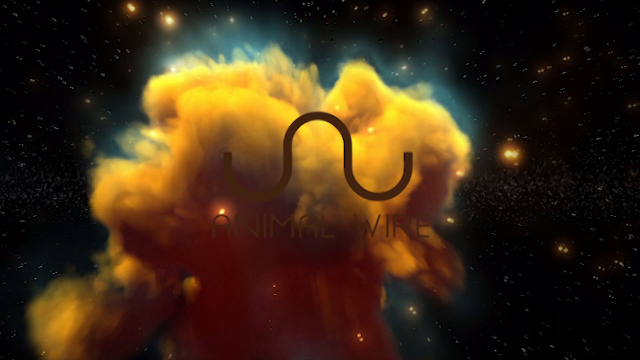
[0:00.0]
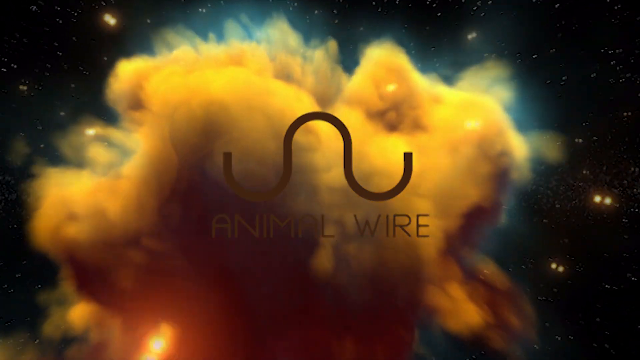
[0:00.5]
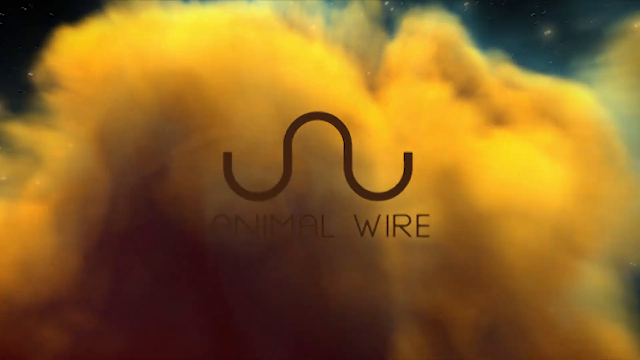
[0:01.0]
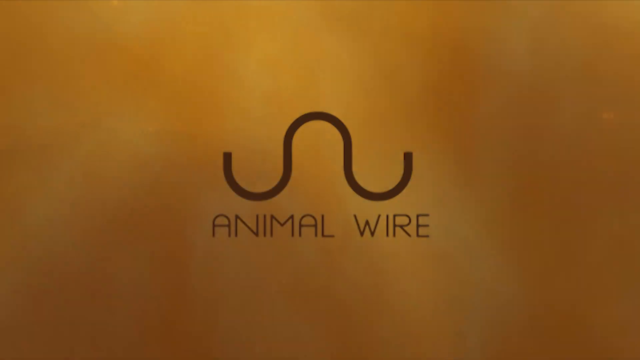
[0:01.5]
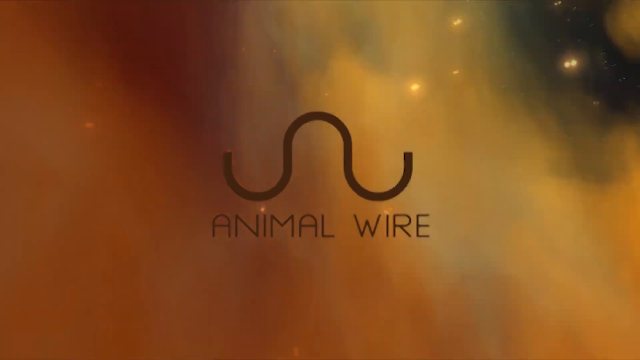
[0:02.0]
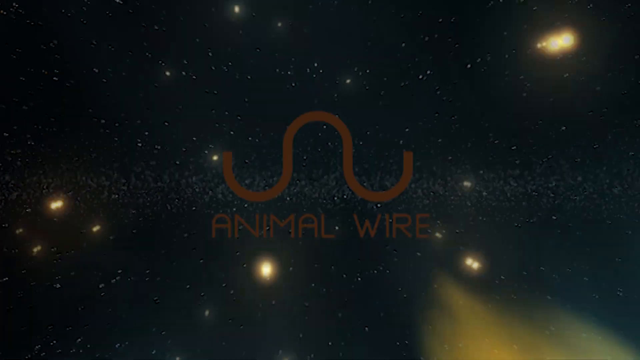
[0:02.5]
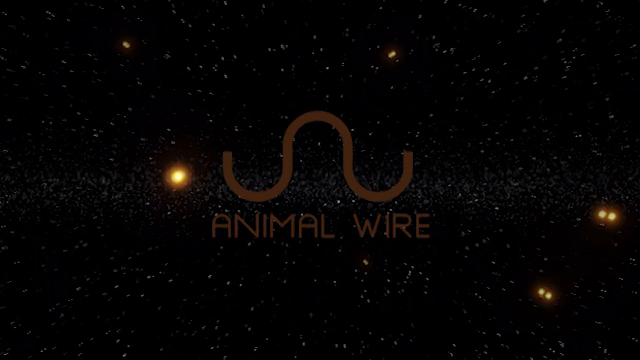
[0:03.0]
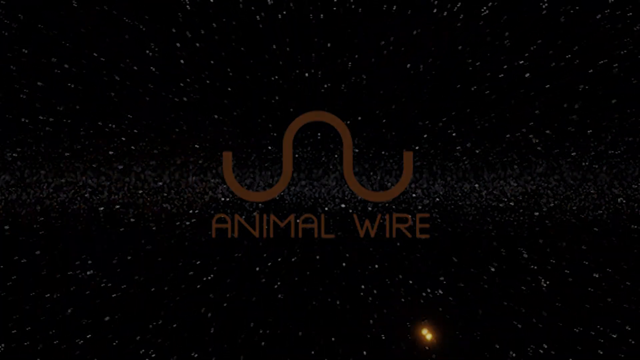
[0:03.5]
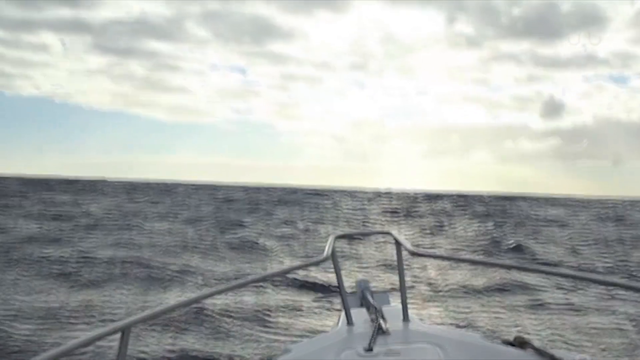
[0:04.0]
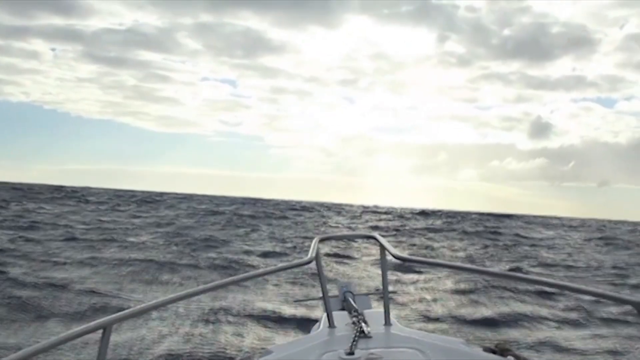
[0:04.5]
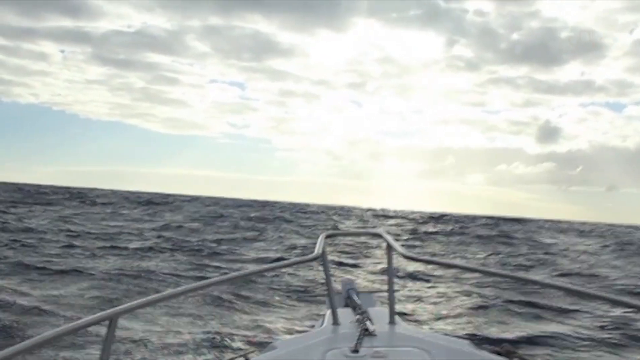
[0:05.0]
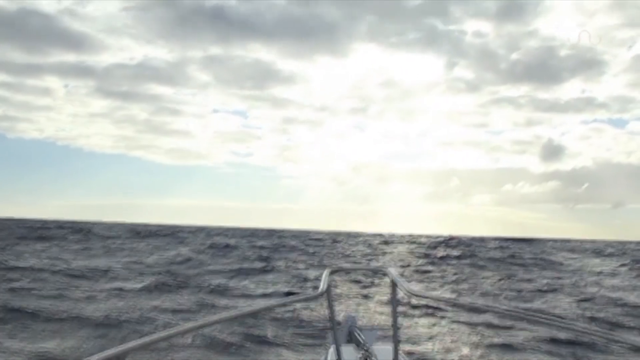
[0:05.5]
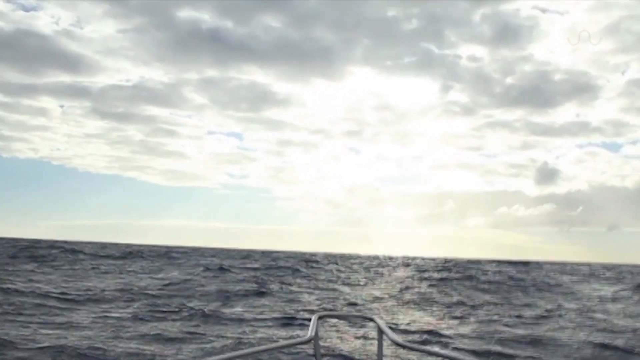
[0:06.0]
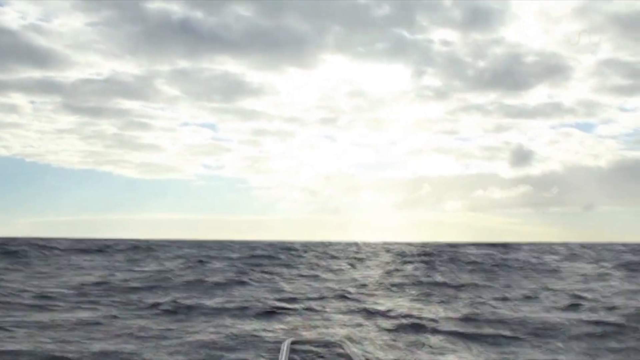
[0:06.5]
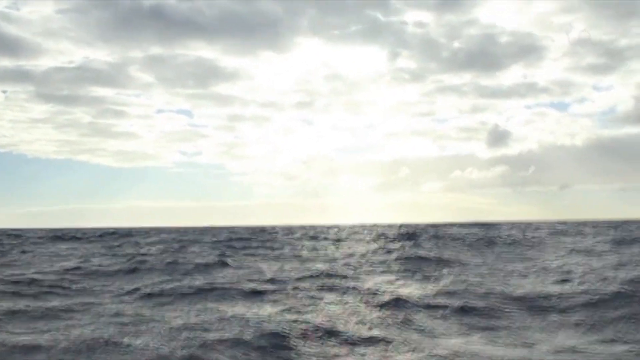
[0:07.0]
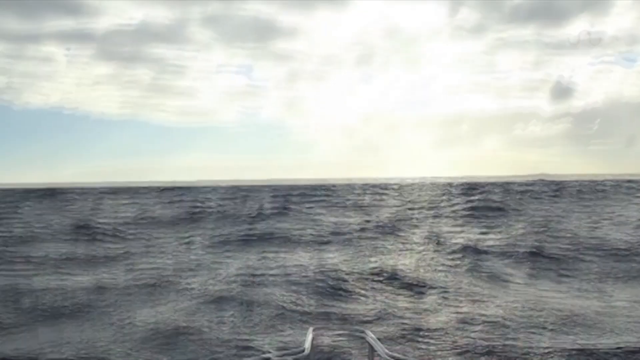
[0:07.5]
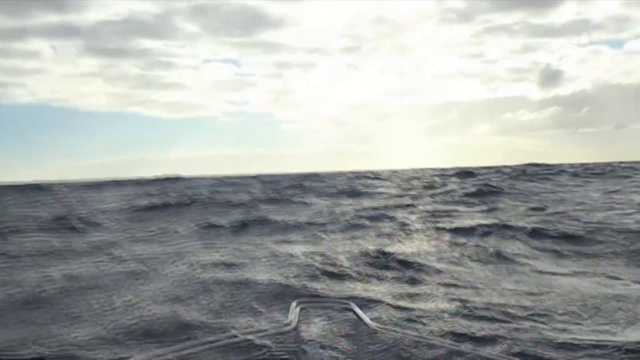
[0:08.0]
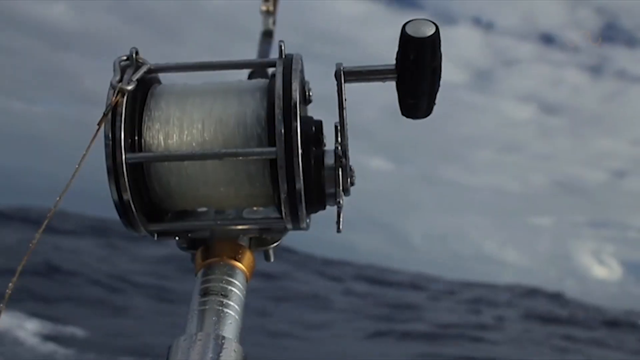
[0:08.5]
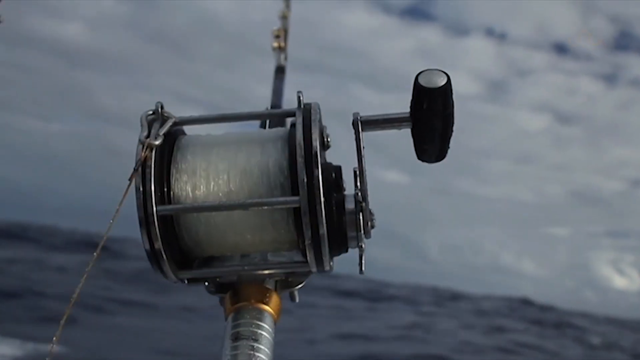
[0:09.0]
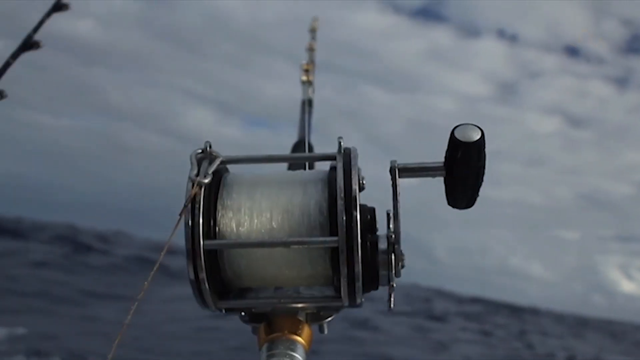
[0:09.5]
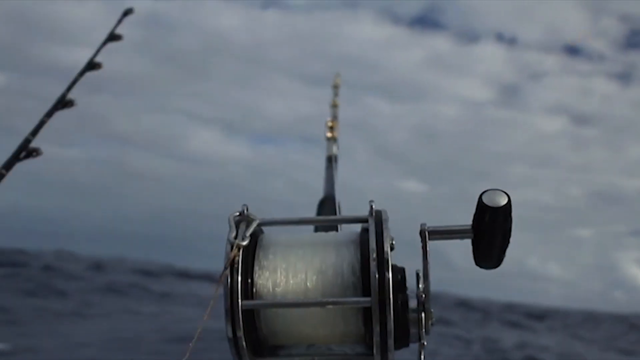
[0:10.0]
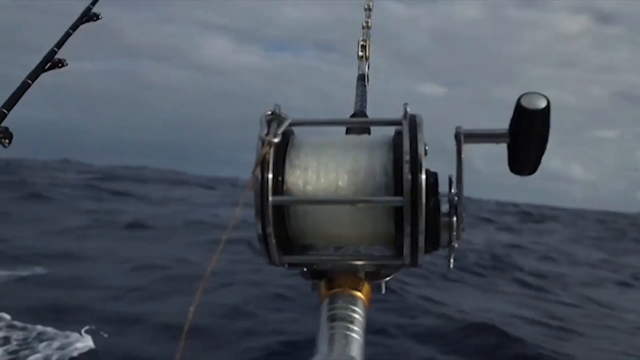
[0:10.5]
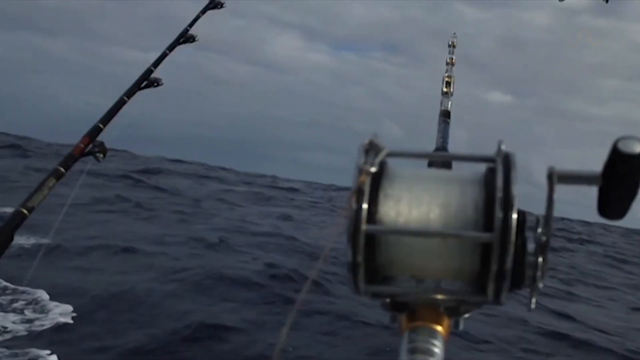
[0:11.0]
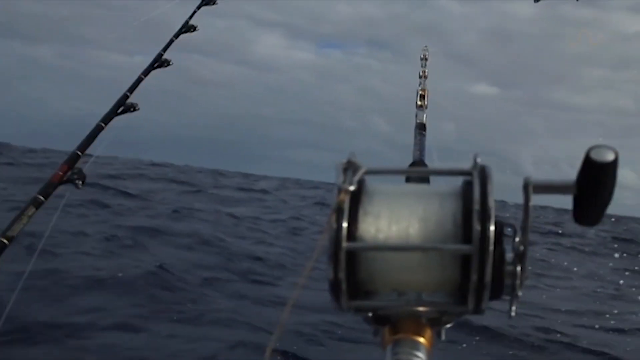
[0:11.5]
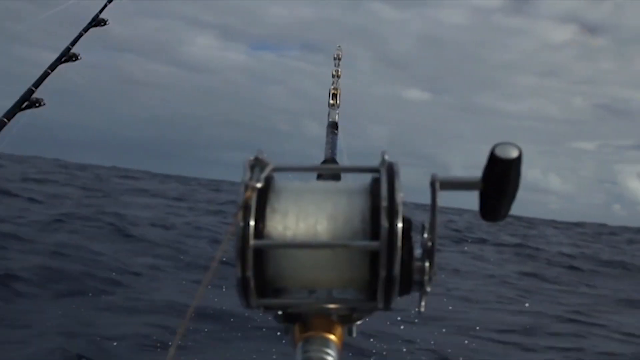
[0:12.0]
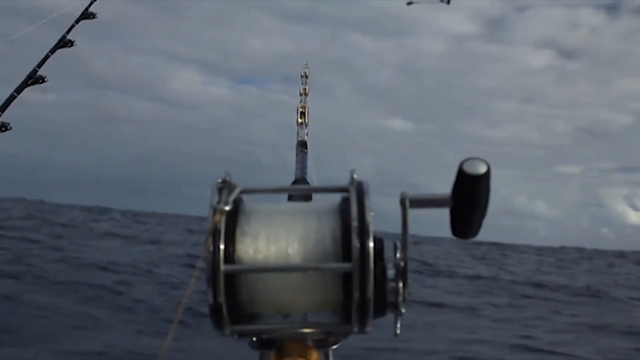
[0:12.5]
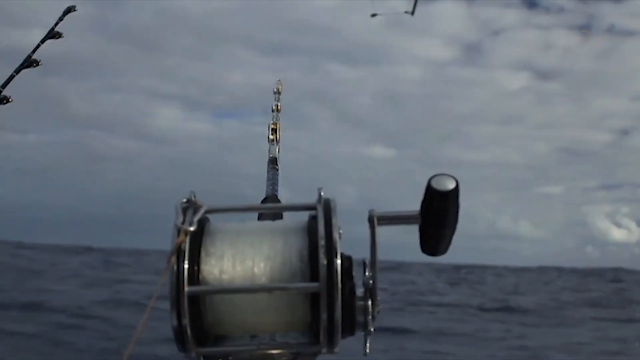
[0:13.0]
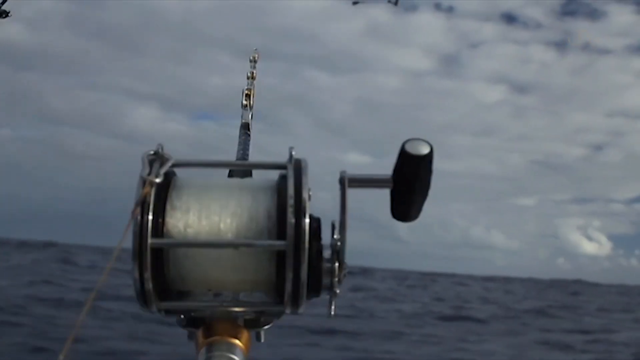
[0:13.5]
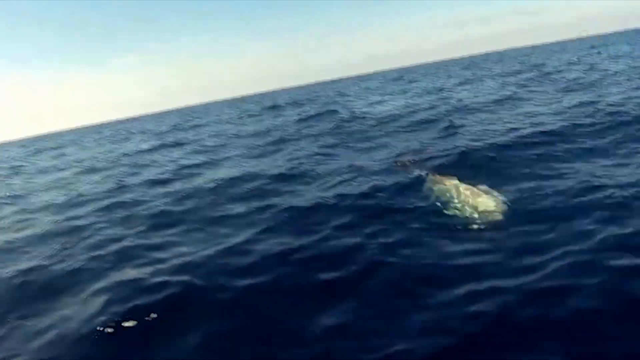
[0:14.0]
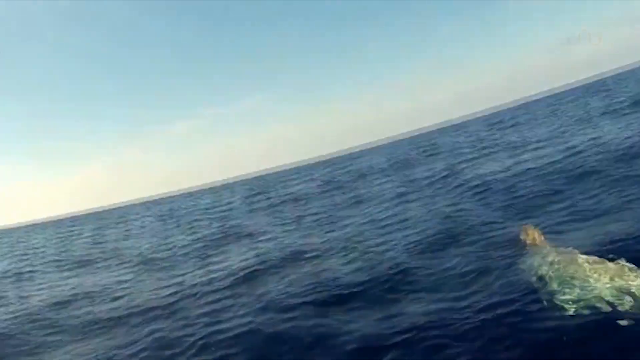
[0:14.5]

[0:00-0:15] An initial, somewhat dark image is hard to make out; it looks kind of like a girl with really long, probably brown hair, possibly riding a whale or a big giant fish. The video opens on a cloudy view, then someone is at the front of a boat, leaning over the front. Two fishermen, both male, are on board, and it looks like they are fishing, with some fishing poles in the water. The view is over the water, and the sky is blue but really cloudy.